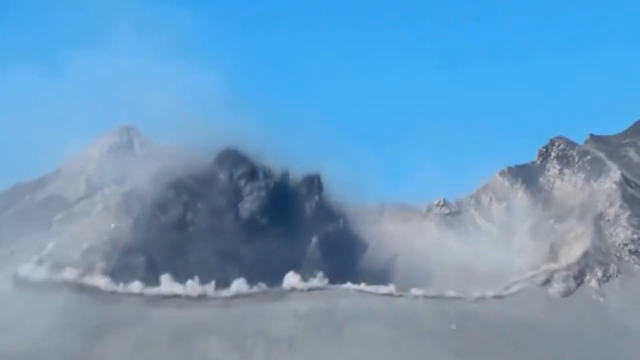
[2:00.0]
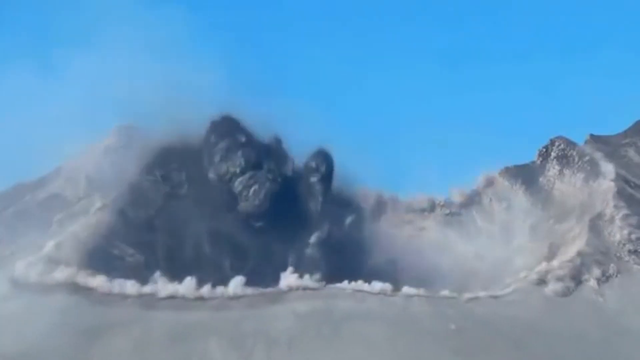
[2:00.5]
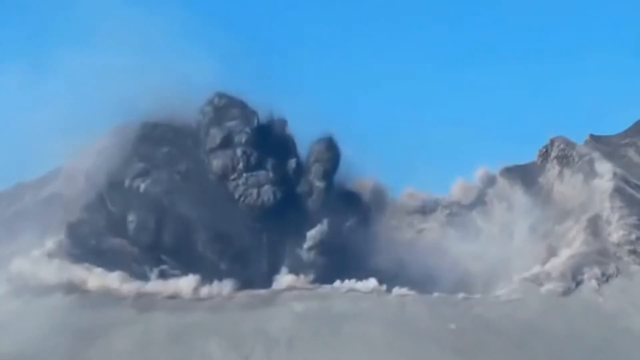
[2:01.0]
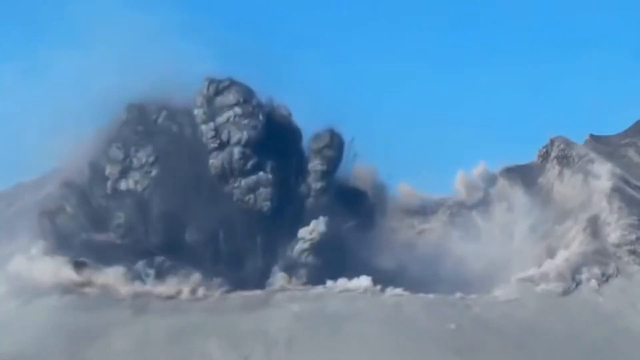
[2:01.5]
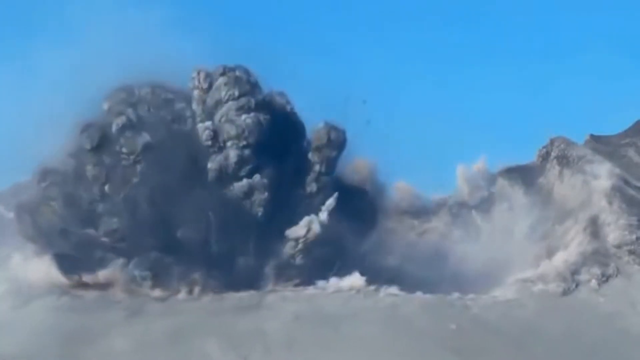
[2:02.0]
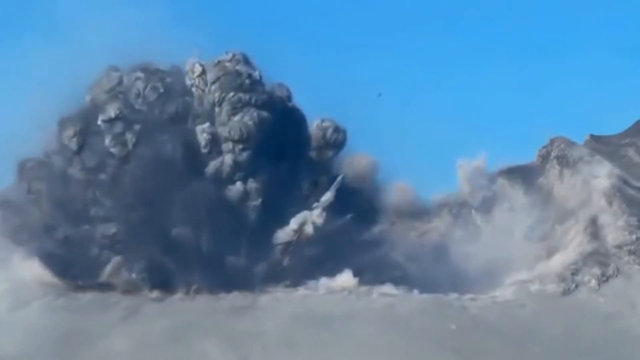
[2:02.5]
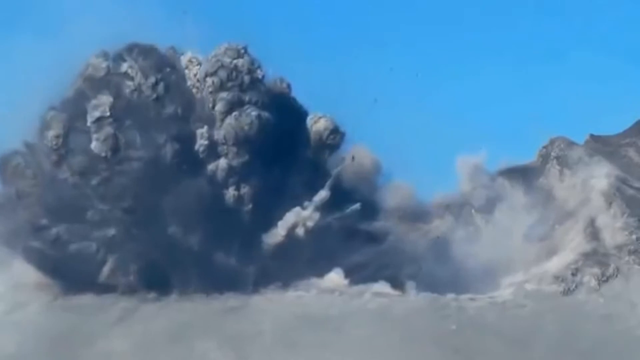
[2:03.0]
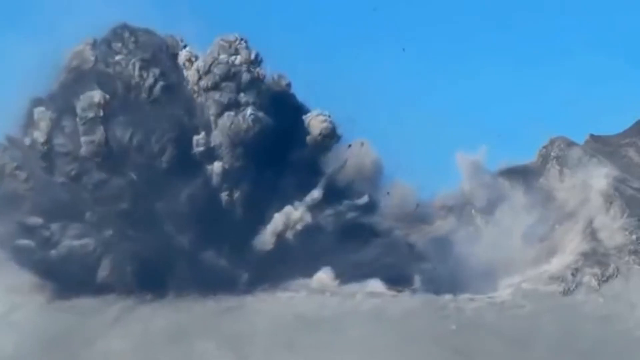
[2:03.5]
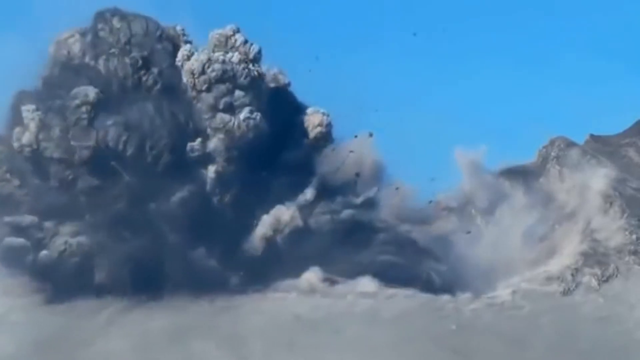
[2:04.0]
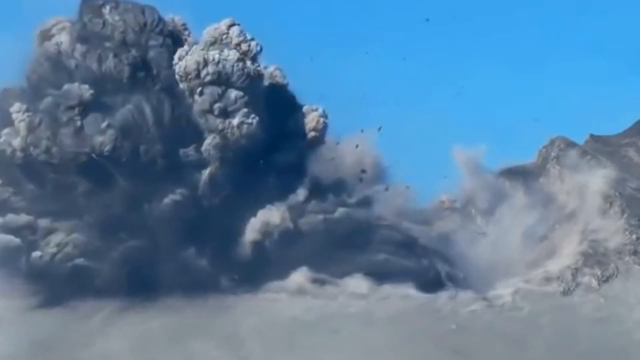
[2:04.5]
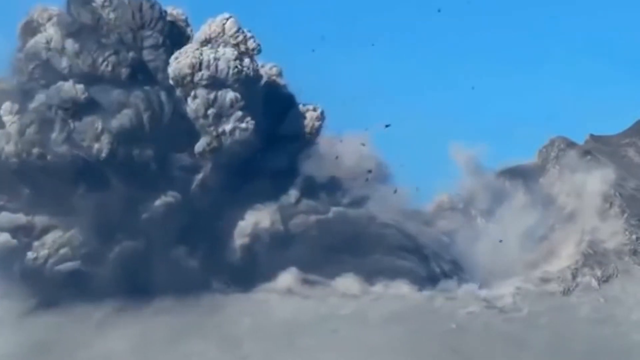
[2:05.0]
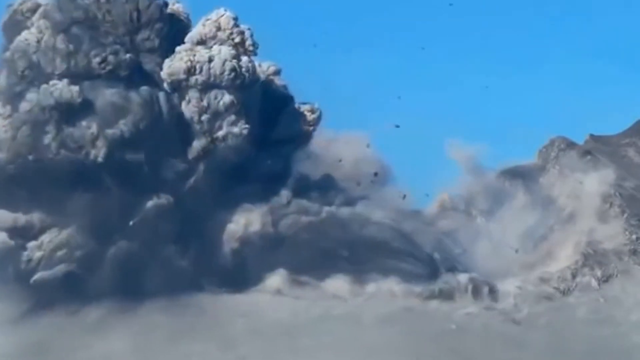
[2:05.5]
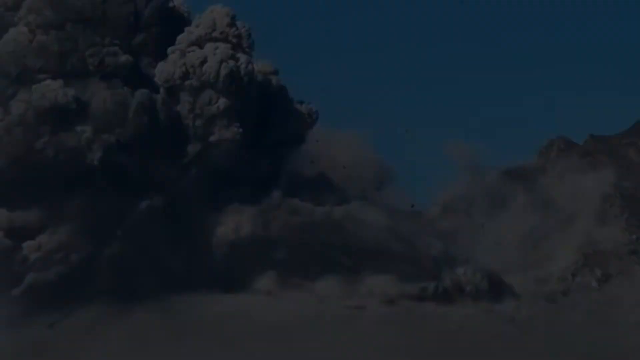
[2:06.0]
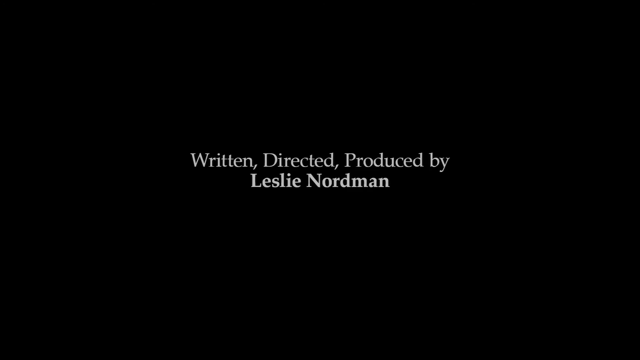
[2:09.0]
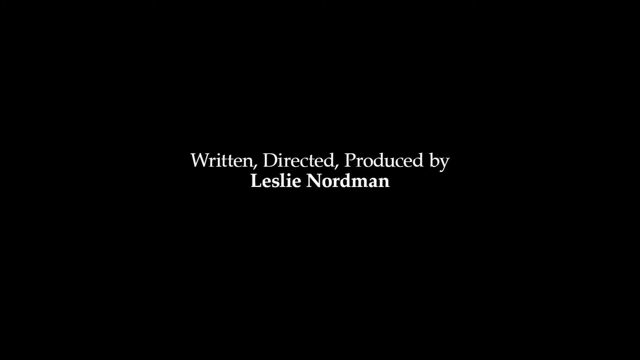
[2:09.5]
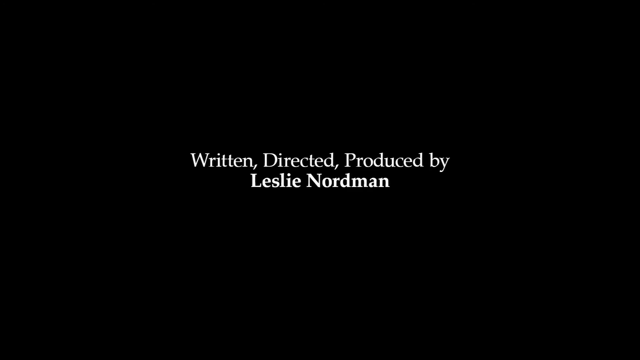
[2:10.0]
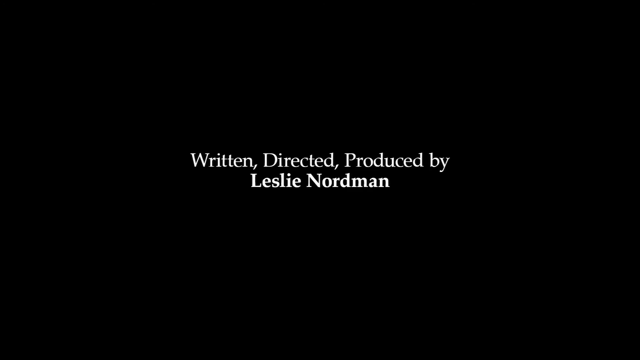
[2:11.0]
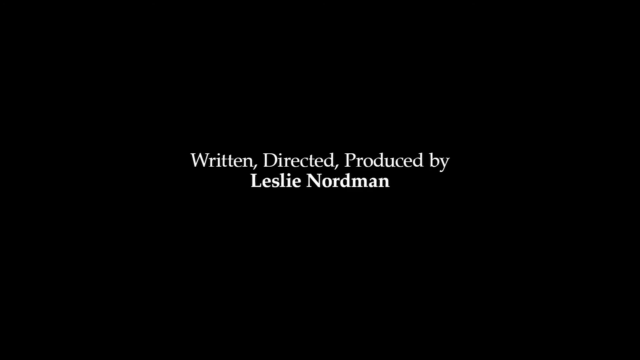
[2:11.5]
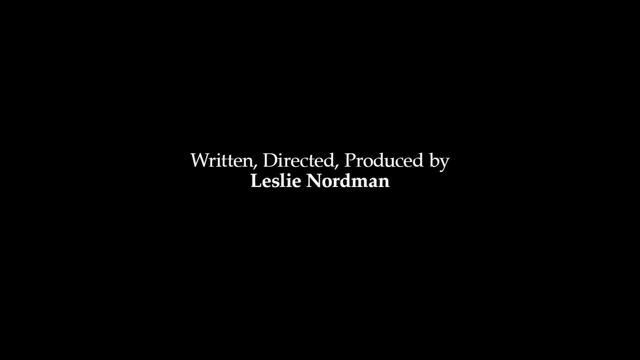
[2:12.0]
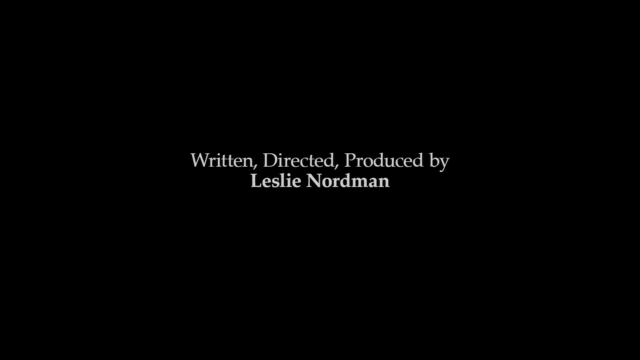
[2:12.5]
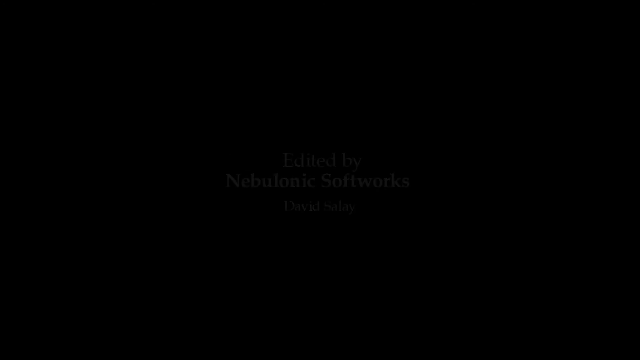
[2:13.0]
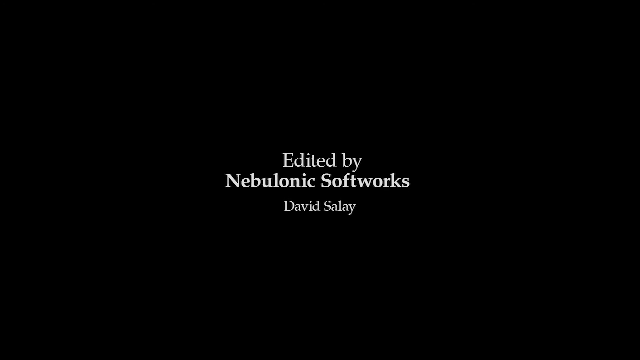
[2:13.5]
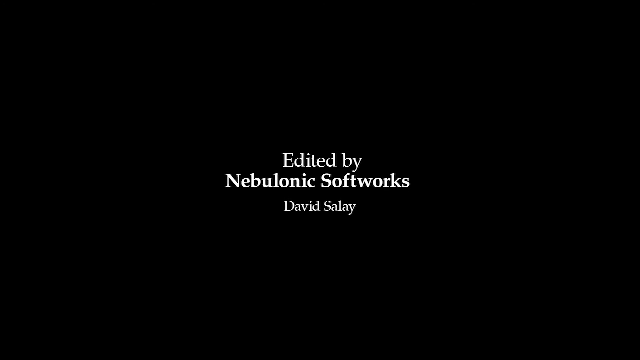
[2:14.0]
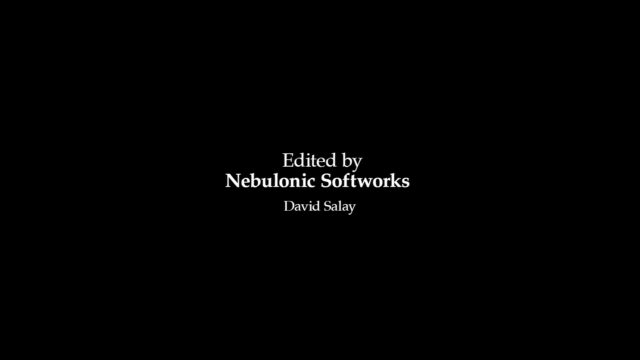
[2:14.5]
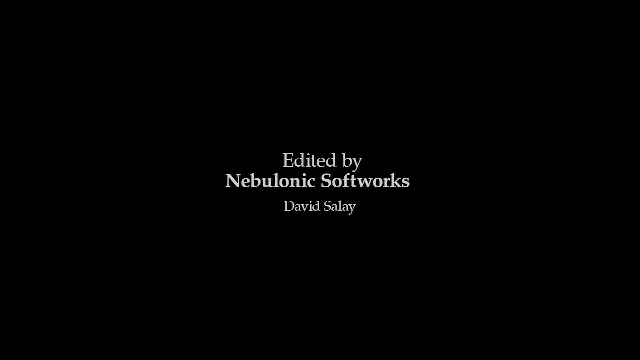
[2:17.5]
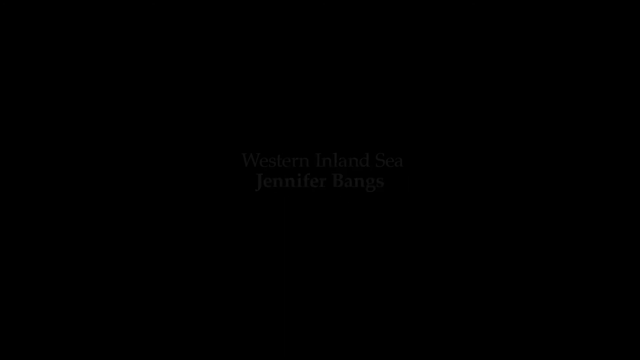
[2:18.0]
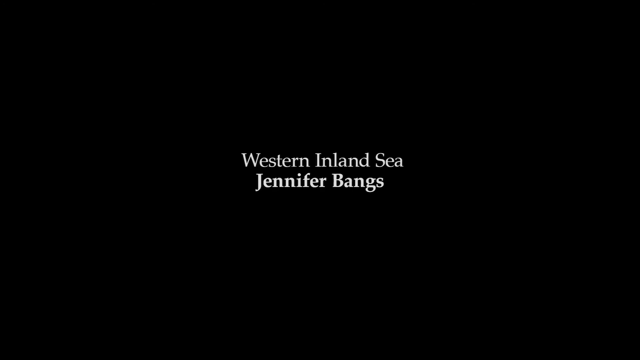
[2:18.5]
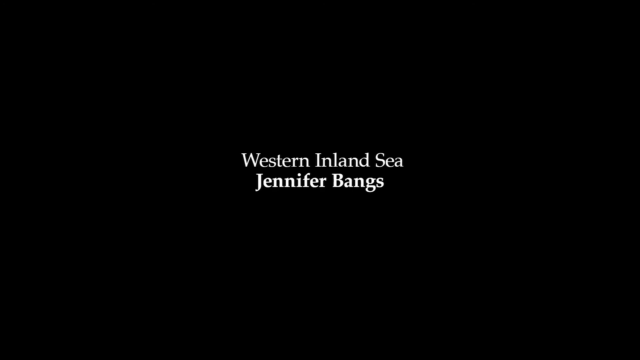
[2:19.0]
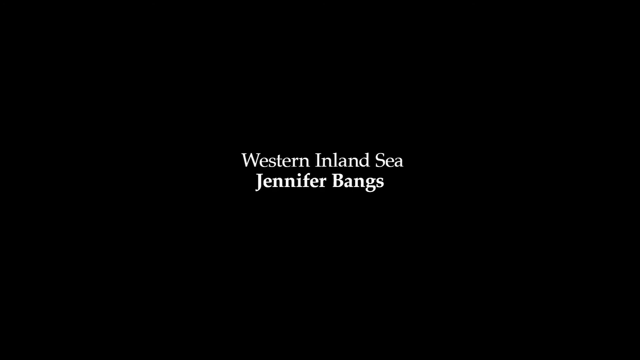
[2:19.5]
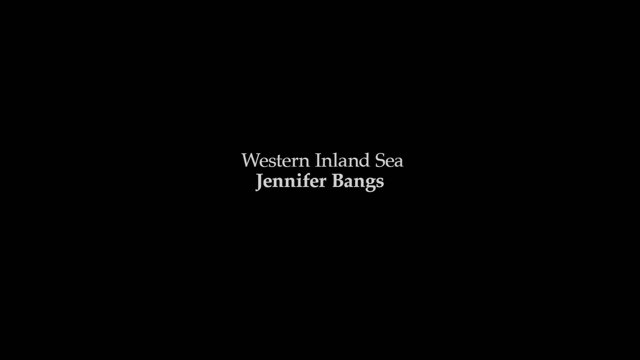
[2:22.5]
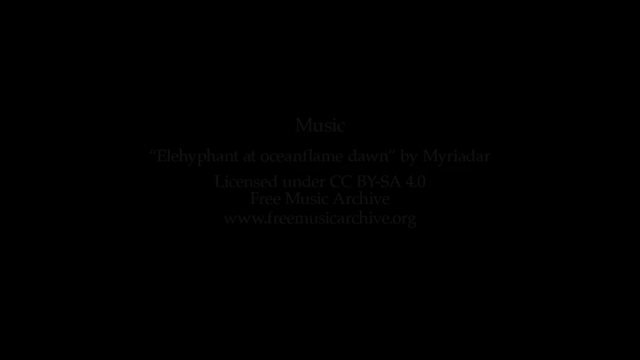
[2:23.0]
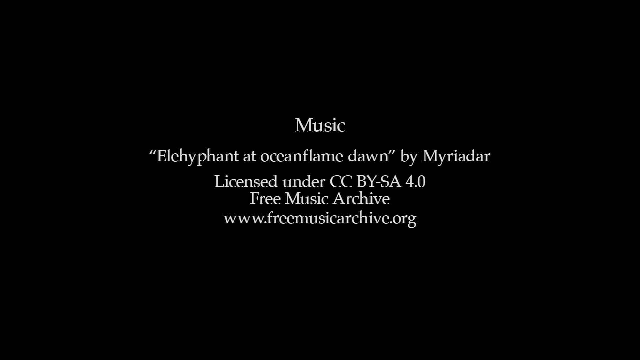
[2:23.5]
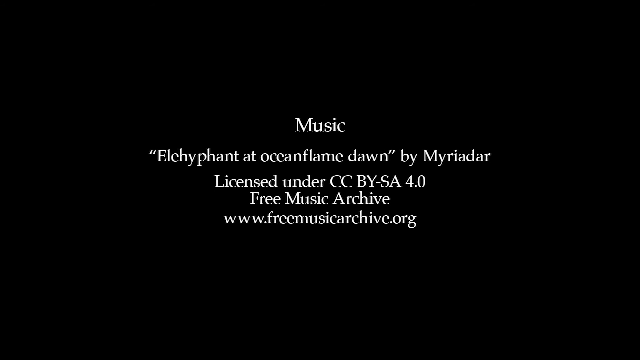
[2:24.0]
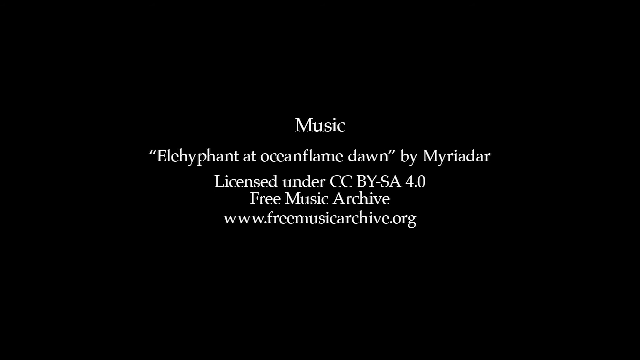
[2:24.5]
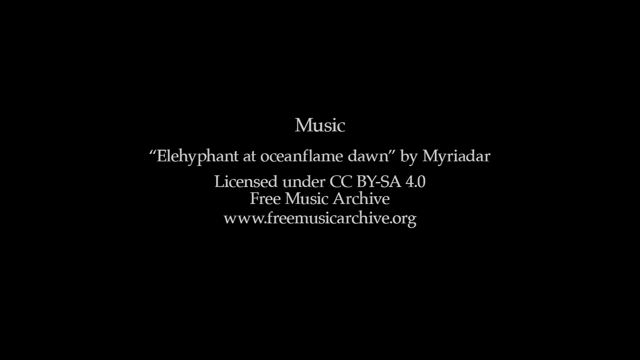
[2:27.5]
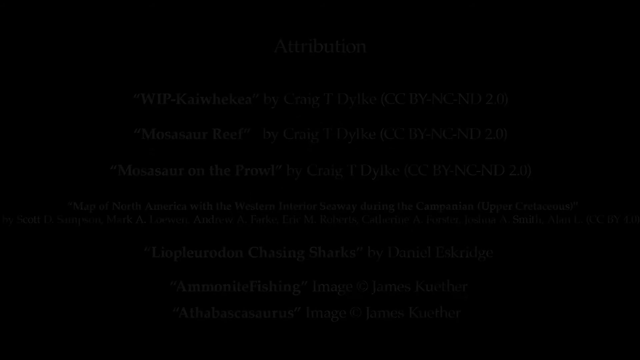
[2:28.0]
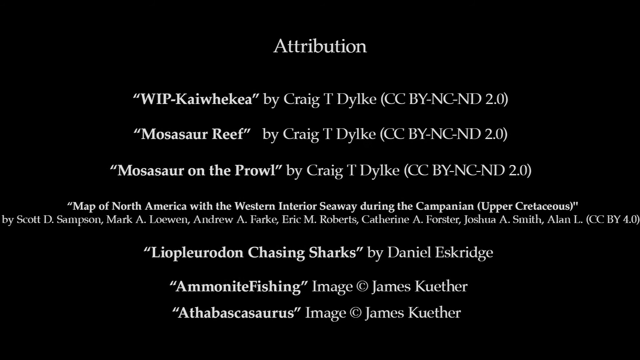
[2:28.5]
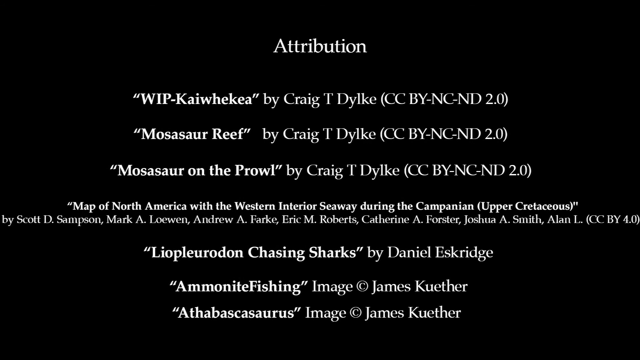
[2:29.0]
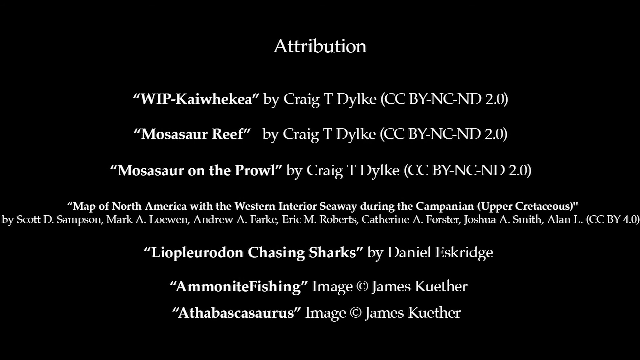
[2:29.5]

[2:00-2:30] Black and white smoke comes out on the ground, the black smoke on the left half and the white smoke on the right. The black smoke is much thicker and comes out faster than the white smoke. It looks like an explosion took place, with rocks and debris shooting out along with the black smoke. After a fade to black, white text appears in the middle in two lines: "written, directed, produced by" and "Leslie Nordman". After another fade to black, three lines appear: "edited by", "Nebulonic Softworks" and "David Saleh". After another fade to black, two lines appear: "Western Inland Sea" and "Jennifer Bangs".